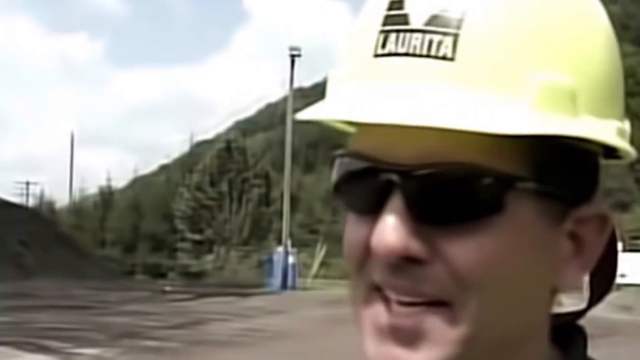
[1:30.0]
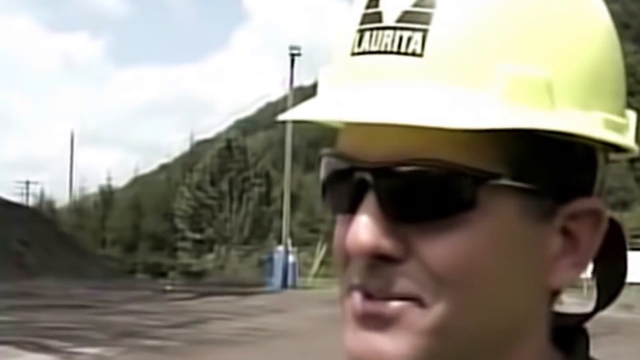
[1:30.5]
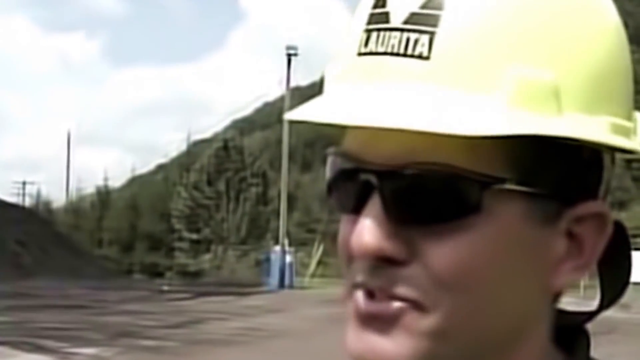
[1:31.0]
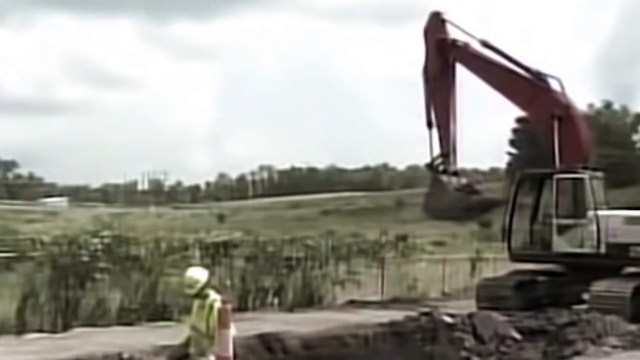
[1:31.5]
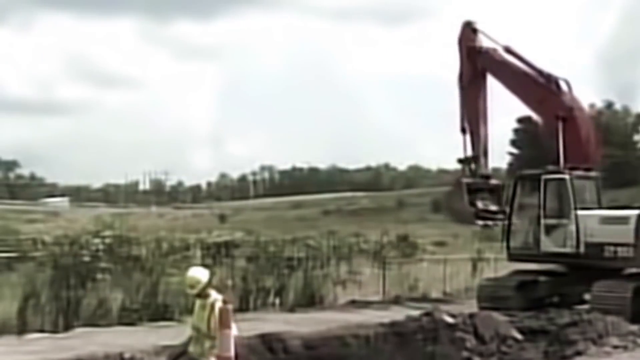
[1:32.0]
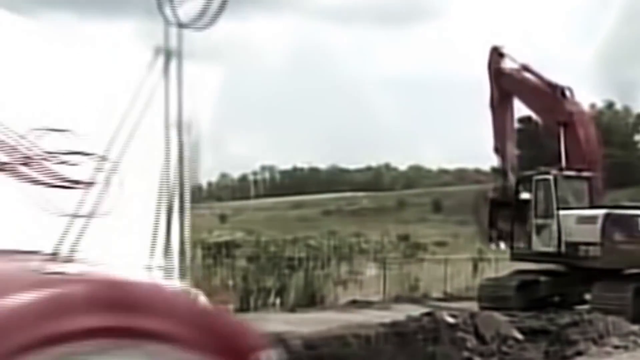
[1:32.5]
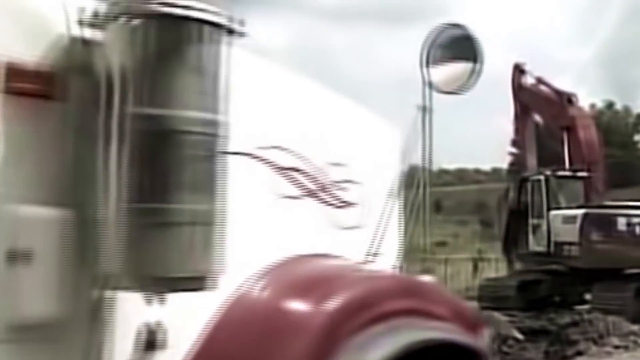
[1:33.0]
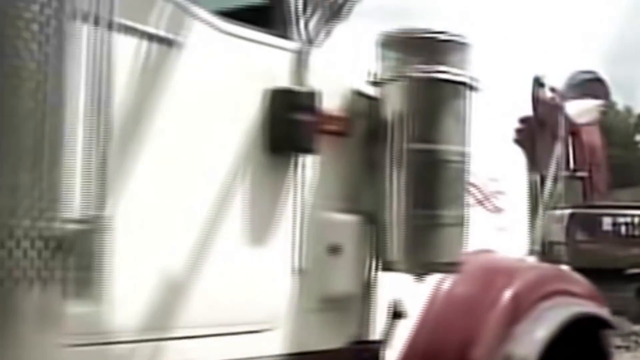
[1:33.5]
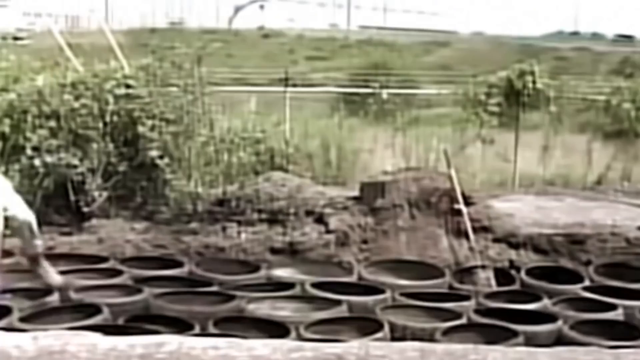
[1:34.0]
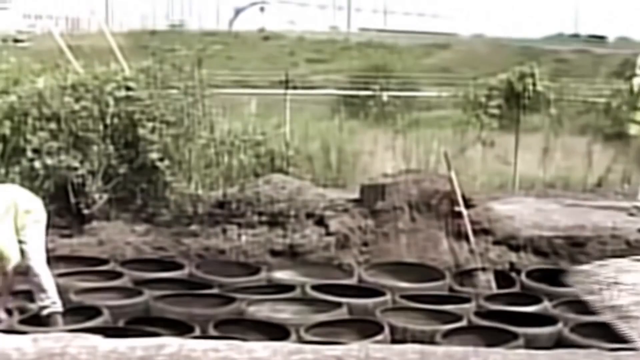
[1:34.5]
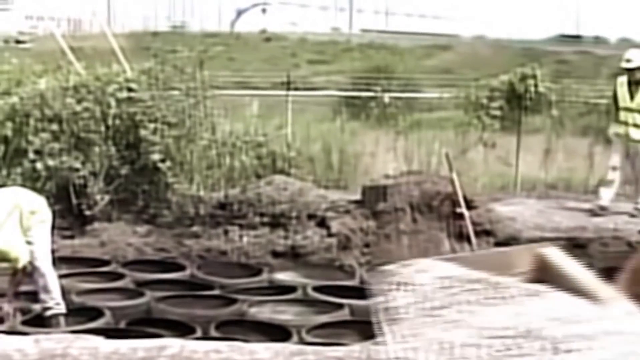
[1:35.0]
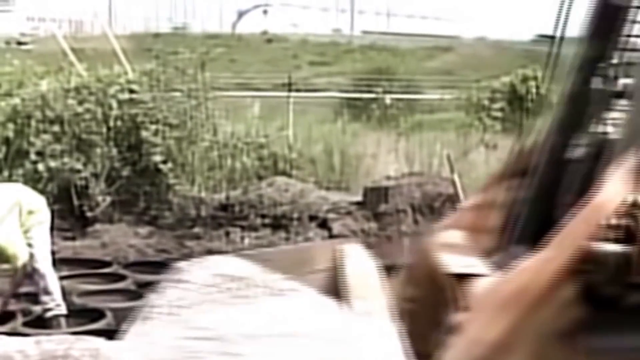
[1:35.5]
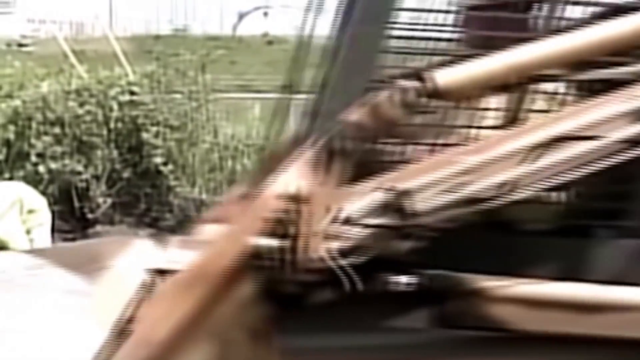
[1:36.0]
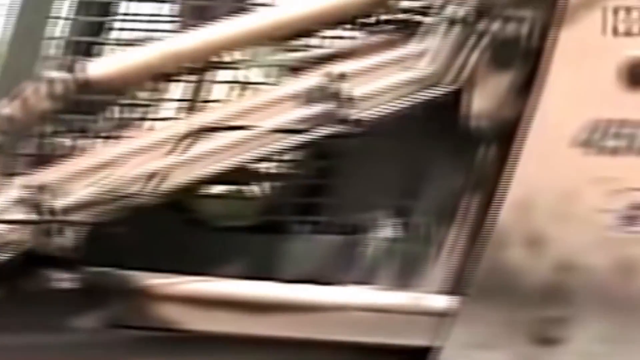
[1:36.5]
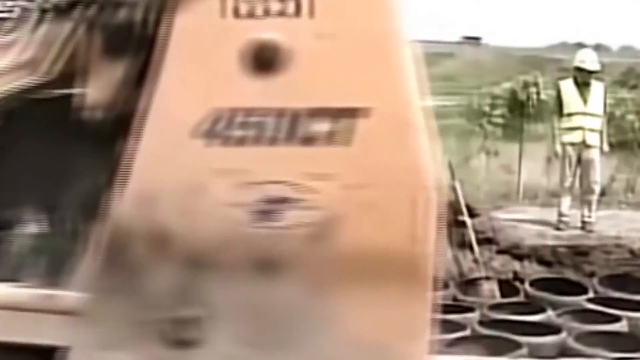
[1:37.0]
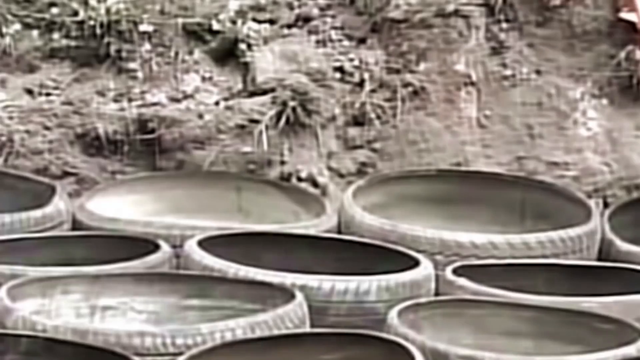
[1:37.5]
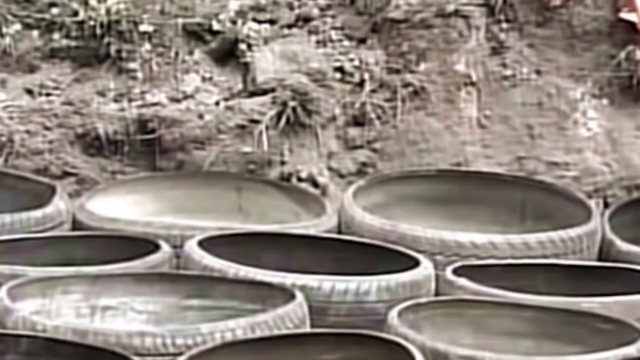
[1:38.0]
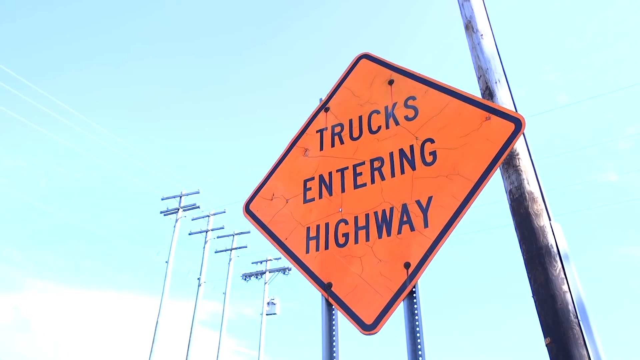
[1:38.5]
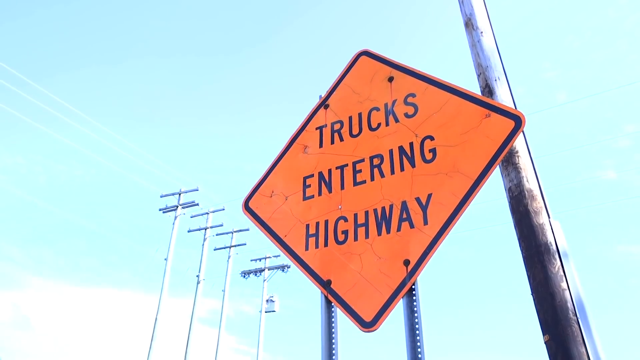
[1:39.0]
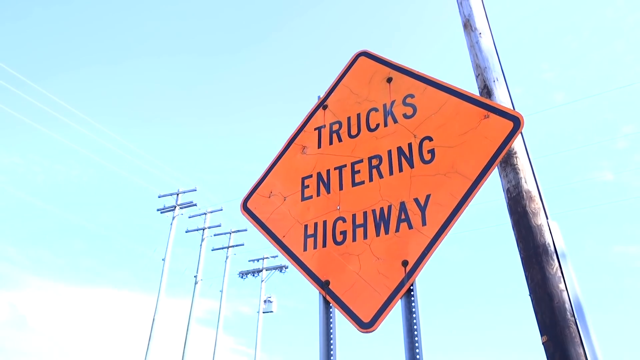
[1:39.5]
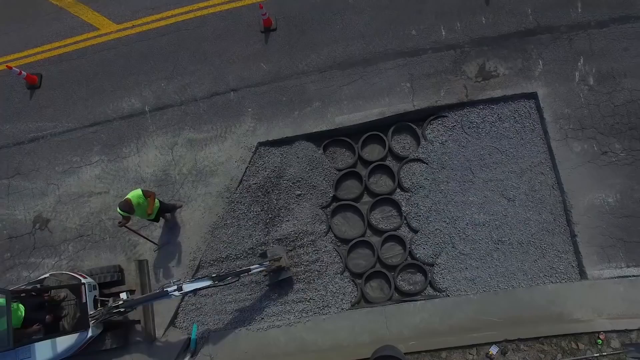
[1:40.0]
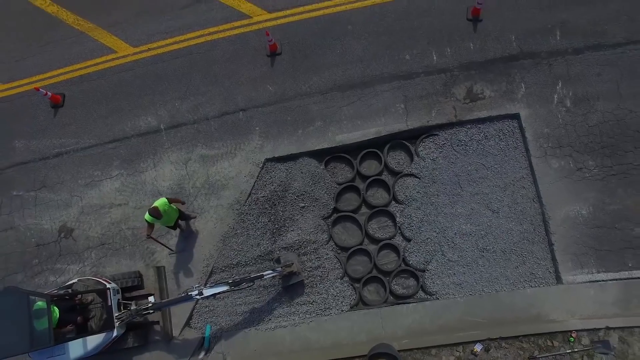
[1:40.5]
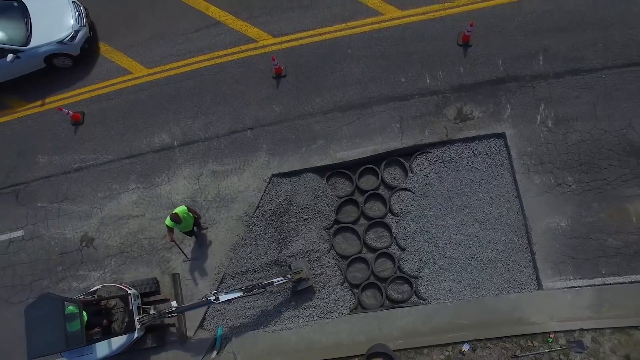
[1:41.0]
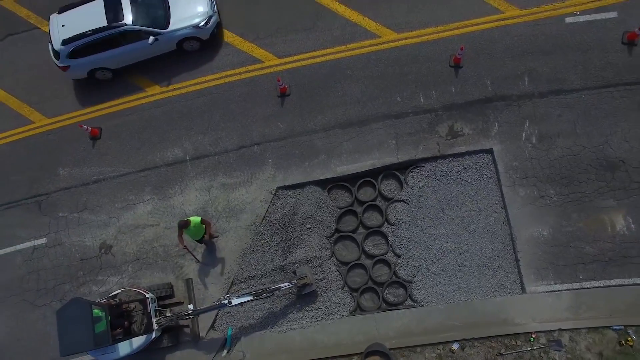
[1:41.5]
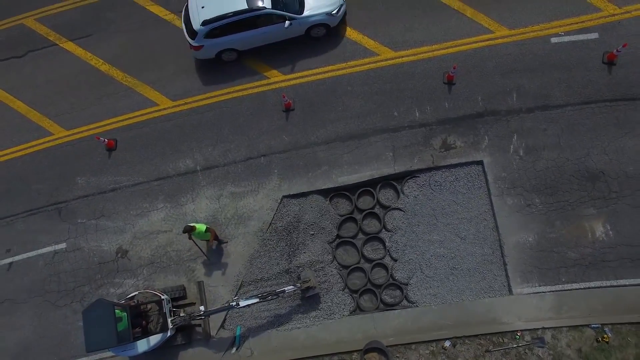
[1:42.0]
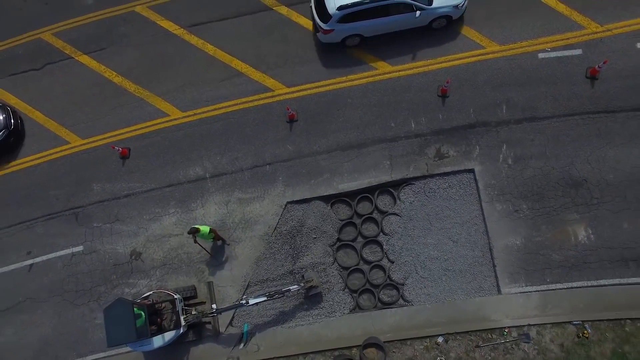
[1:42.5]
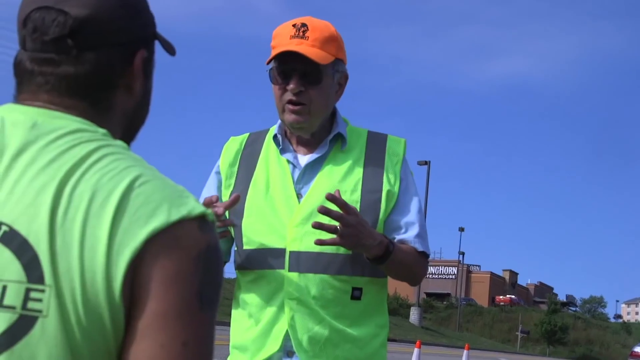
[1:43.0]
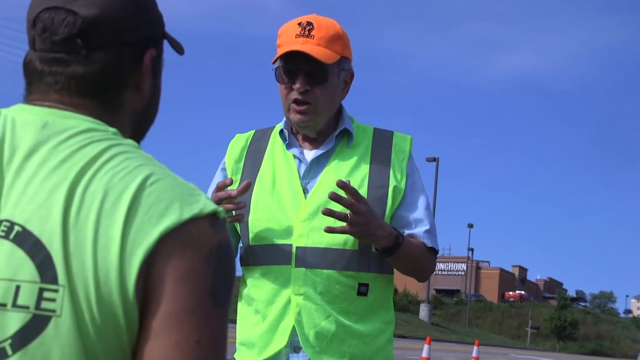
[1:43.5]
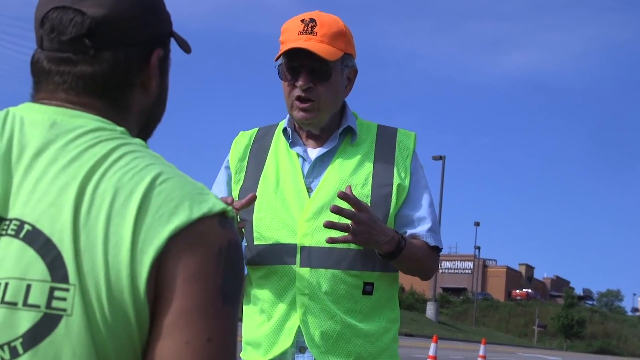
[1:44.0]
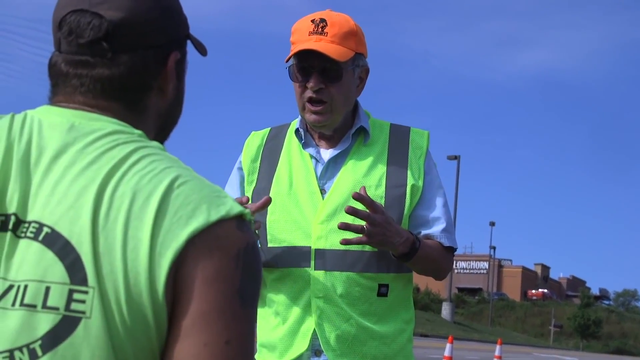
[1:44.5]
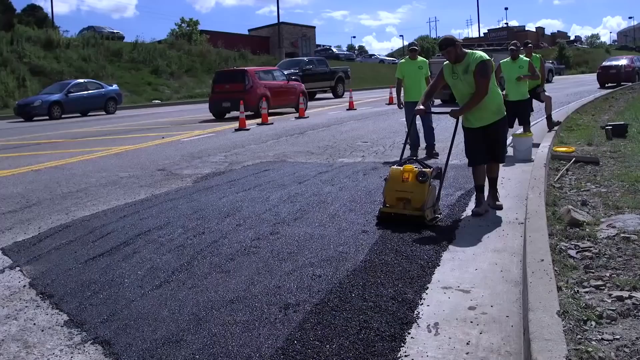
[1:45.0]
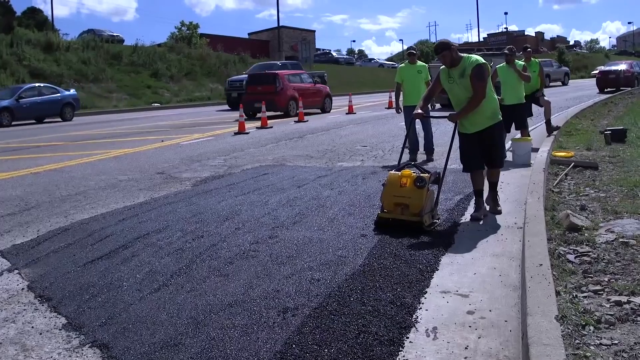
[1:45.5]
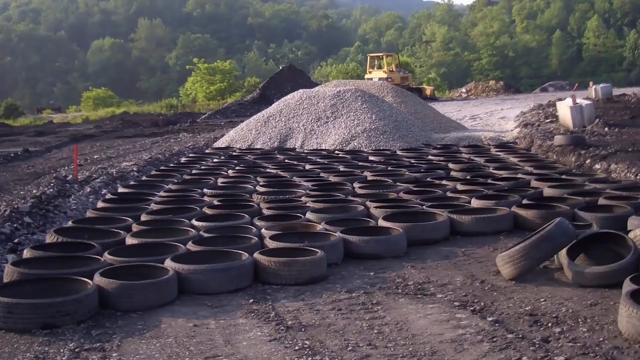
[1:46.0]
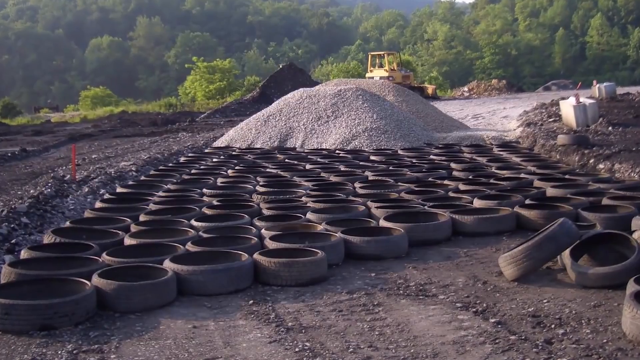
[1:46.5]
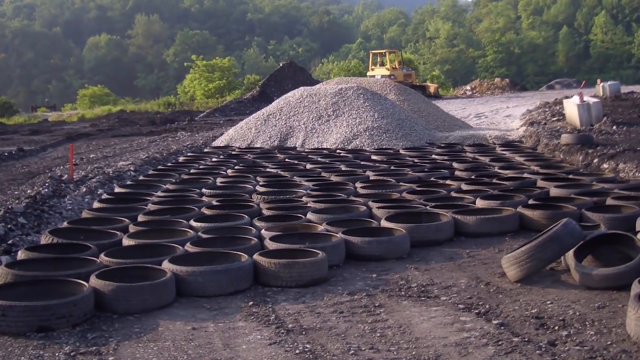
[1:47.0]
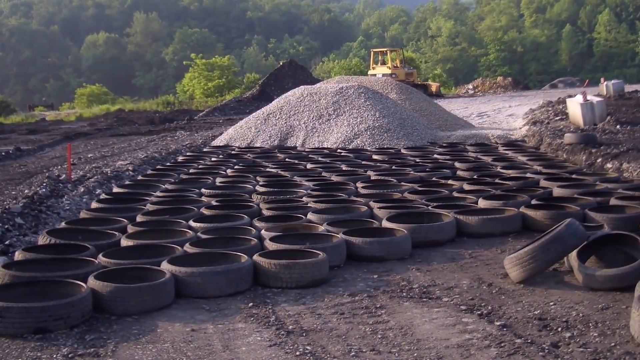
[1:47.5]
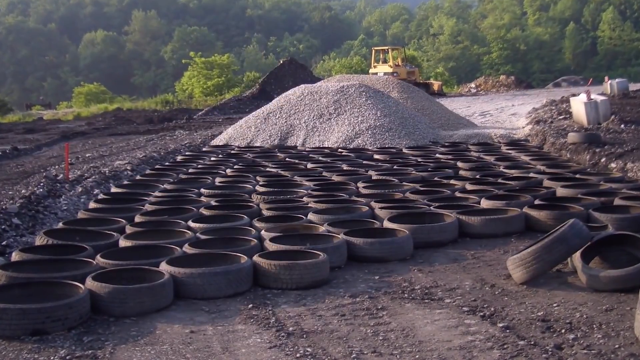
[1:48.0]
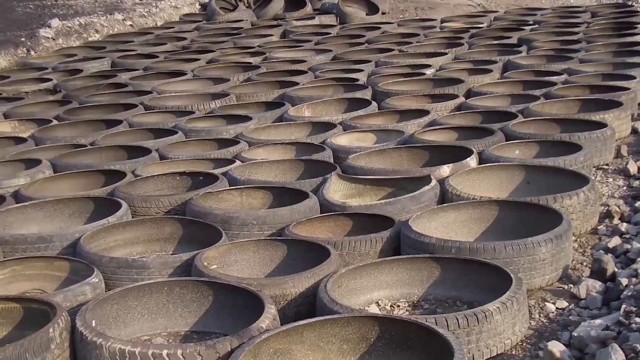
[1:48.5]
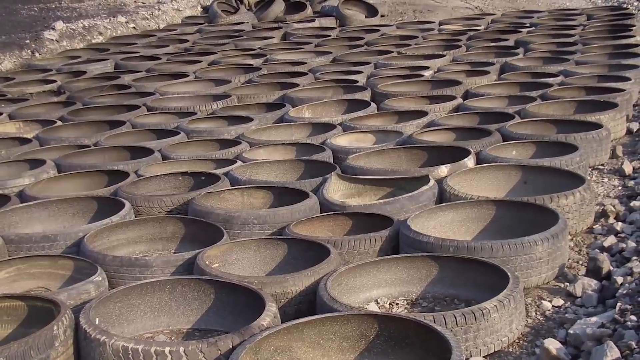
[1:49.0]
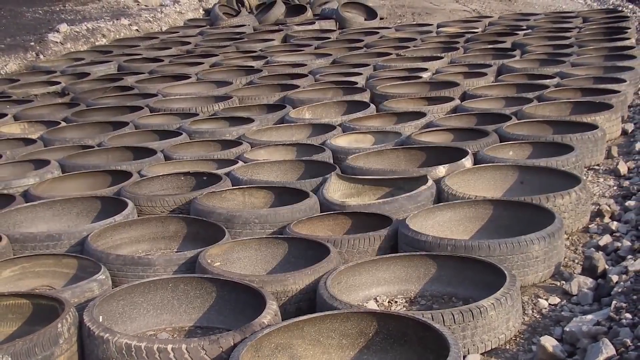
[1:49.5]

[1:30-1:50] A close-up shows a man who is probably being interviewed. He wears black sunglasses and a safety helmet. The center of the helmet has a black bar with yellow text reading "La Rida." Above it are a few more black bars: on the left half, two small ones form something like part of a triangle without the tip, and the right side has two parts as well, mirror images of the left. More shots show the wheels on the ground as they are placed into the roads. An orange diamond-shaped warning traffic sign reads "trucks entering highway," one word per line. The video cuts to an overhead shot of a trapezoid cut out of the ground, with the wheels in the hole arranged in two columns, five wheels high each from this view. To the left and right of the wheels, the hole has been covered with black sediment to fill up the road again.